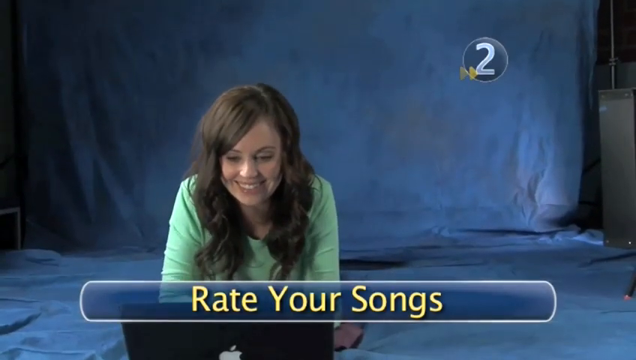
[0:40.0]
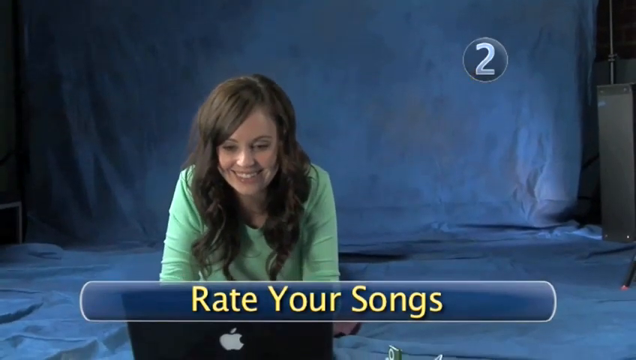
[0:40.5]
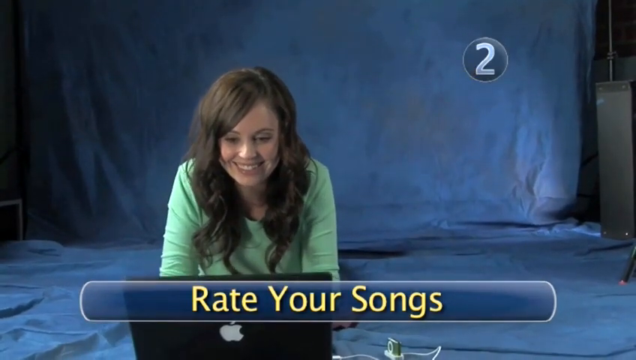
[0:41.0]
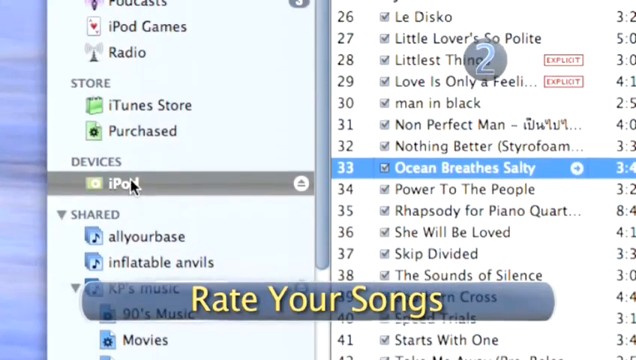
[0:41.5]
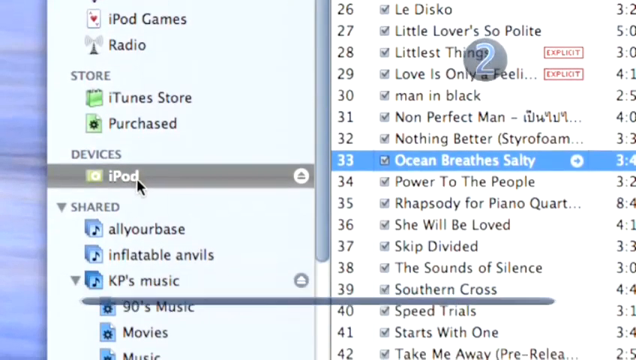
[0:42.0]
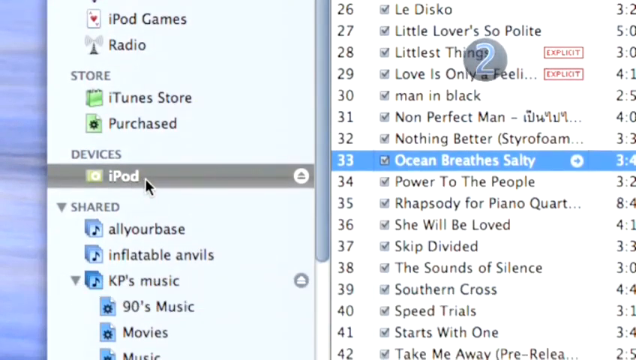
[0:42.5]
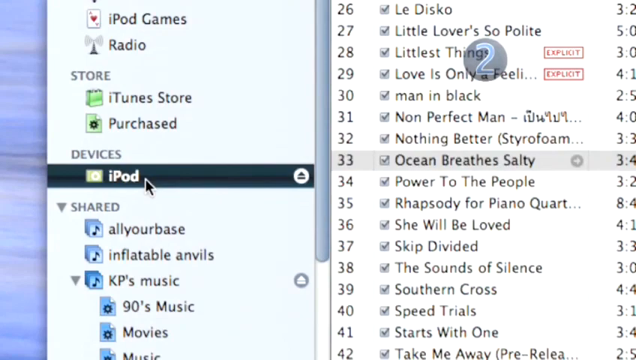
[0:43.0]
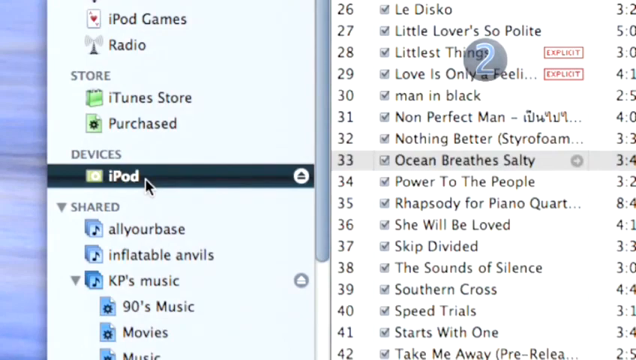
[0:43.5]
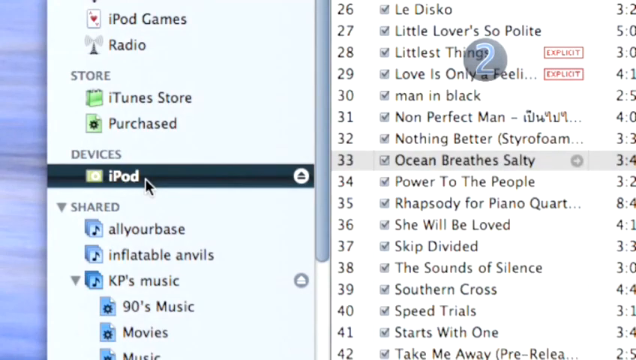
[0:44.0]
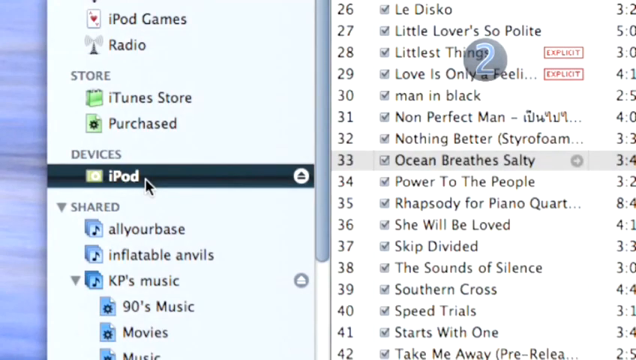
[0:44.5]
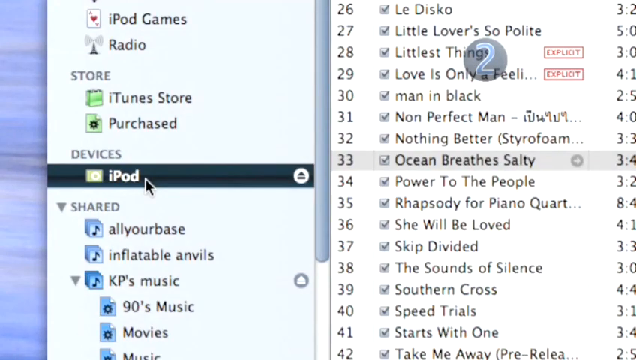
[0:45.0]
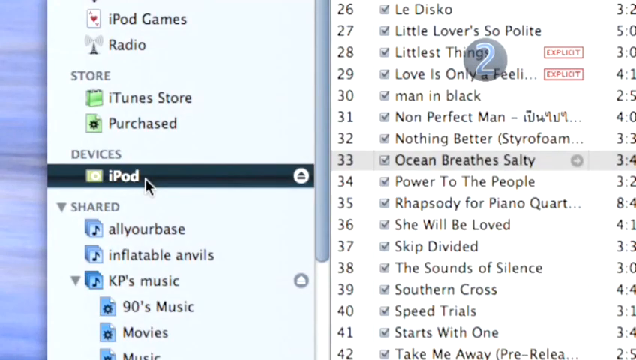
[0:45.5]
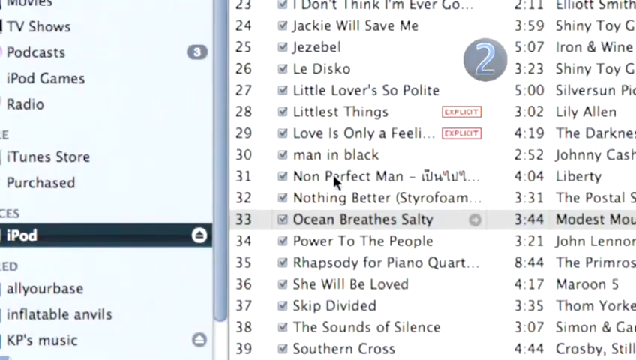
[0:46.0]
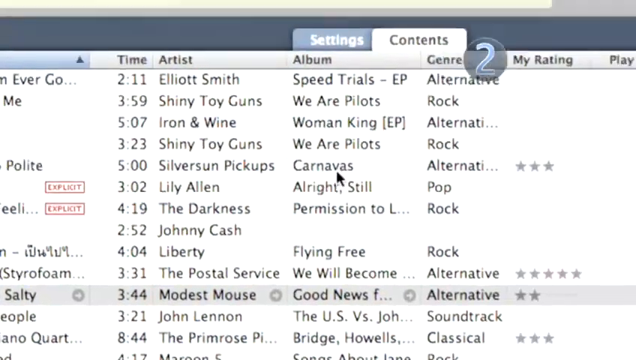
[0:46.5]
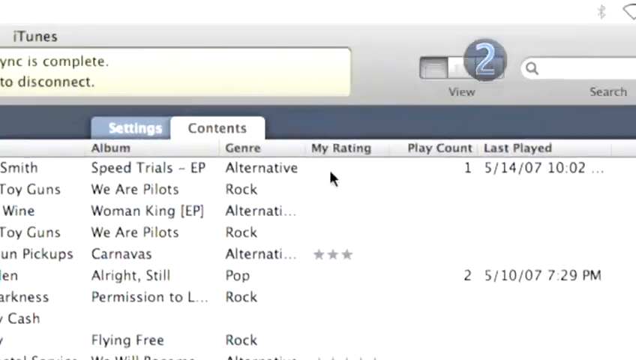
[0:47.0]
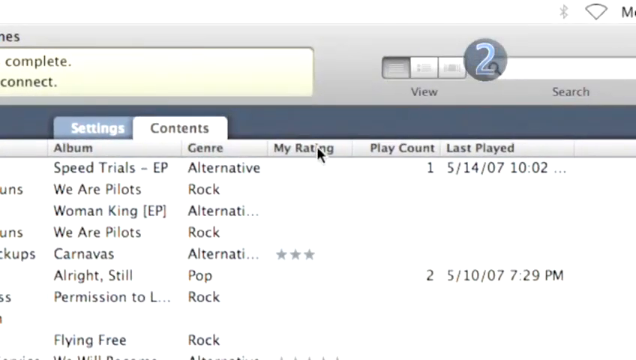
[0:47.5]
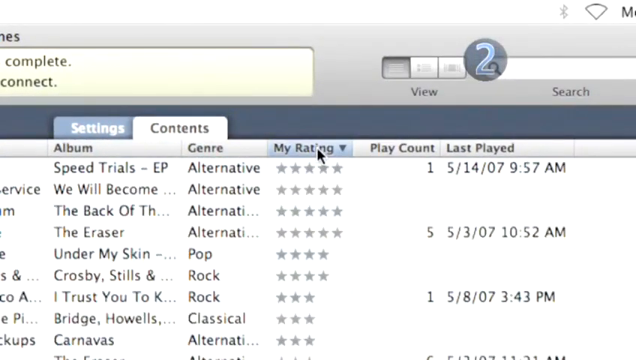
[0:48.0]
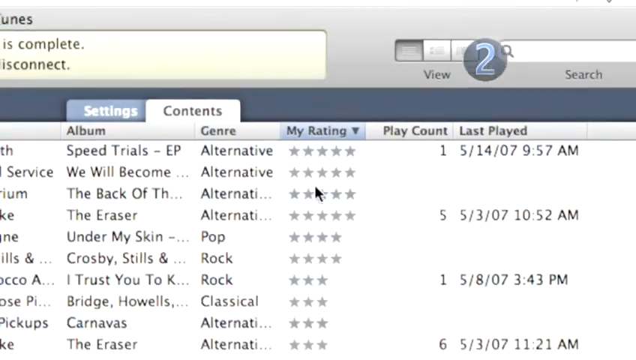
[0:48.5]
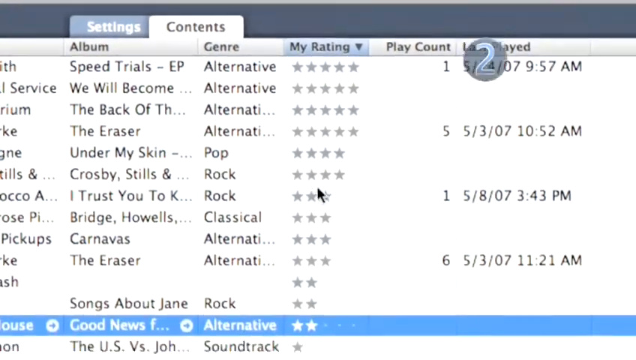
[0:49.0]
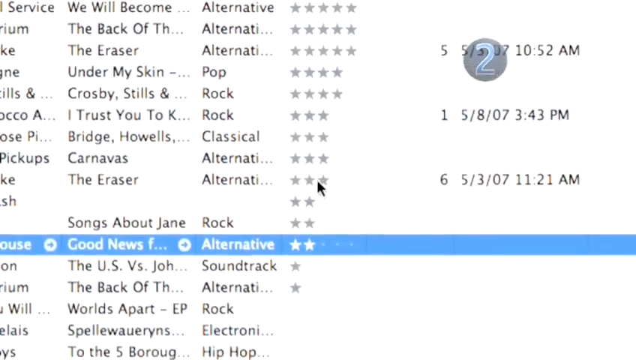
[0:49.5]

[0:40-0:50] The girl smiles at her laptop, with the text "Rate Your Songs" on the screen. The view switches to the laptop screen, where a program has iPods selected. The right side of the screen shows about 15 or 16 tracks on the iPod playlist. The view pans to the top, where it says "My Rating," and the songs are sorted from highest rating to lowest. Someone then goes down to a song with two stars on the playlist and highlights it, but nothing further is done.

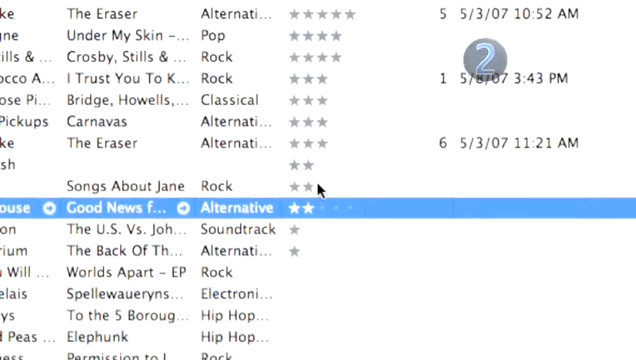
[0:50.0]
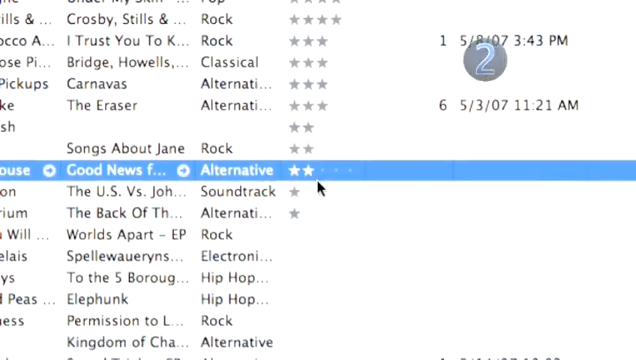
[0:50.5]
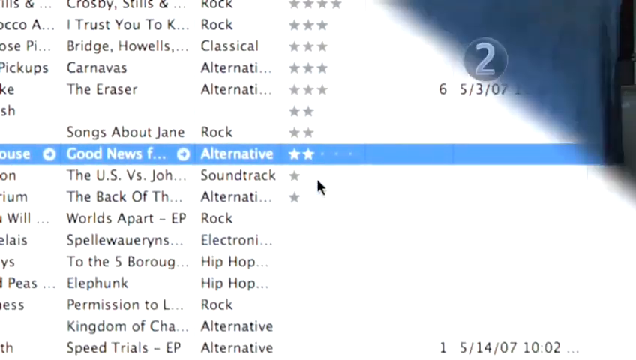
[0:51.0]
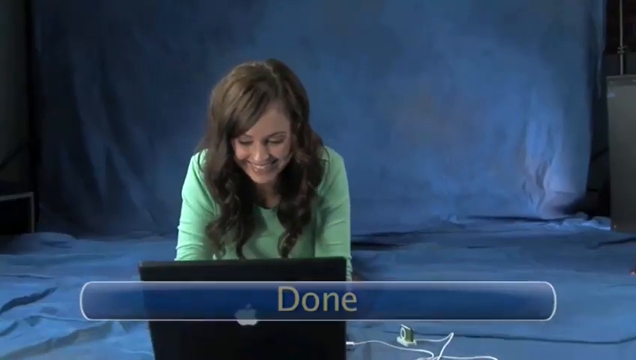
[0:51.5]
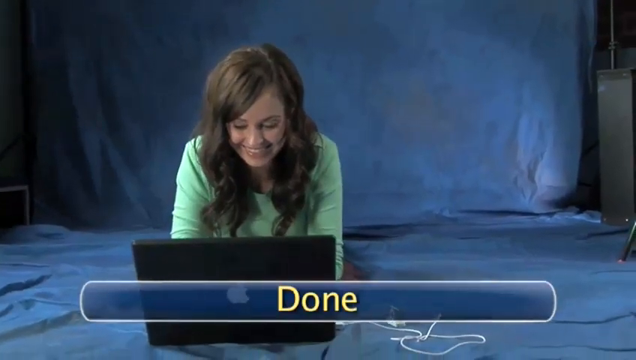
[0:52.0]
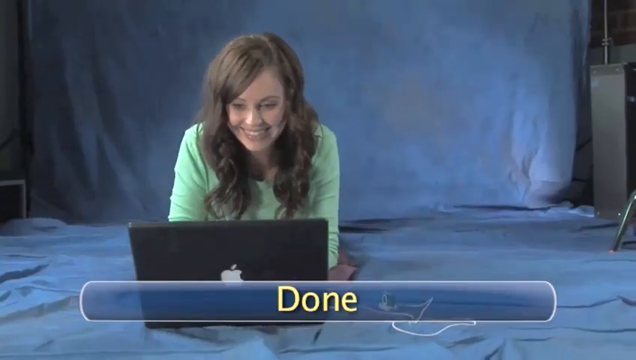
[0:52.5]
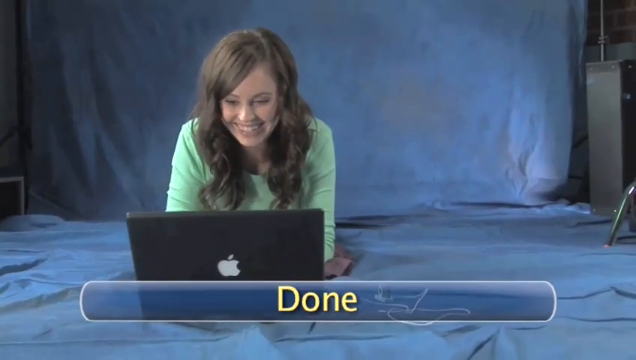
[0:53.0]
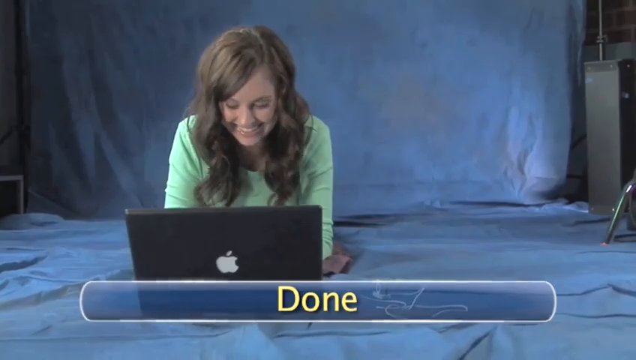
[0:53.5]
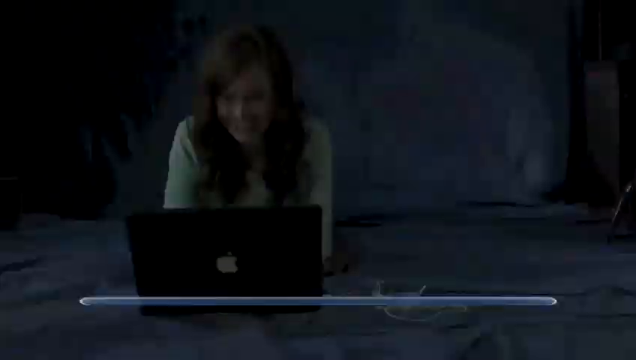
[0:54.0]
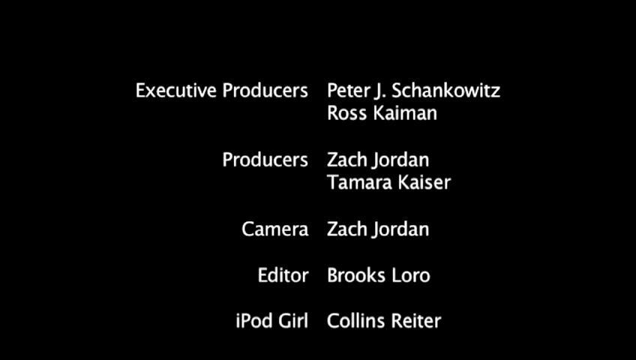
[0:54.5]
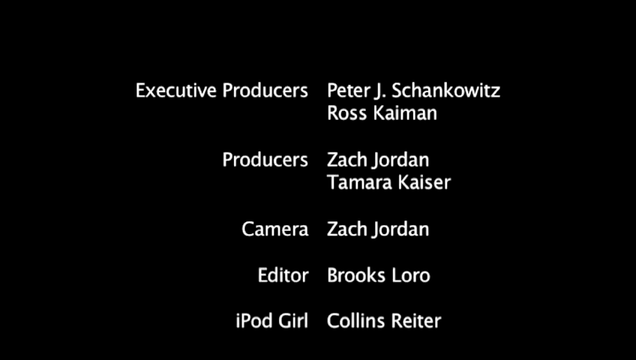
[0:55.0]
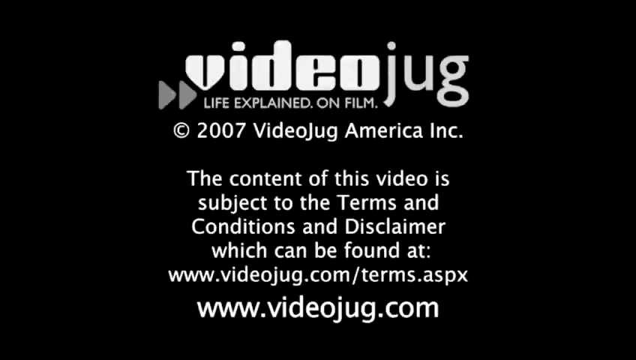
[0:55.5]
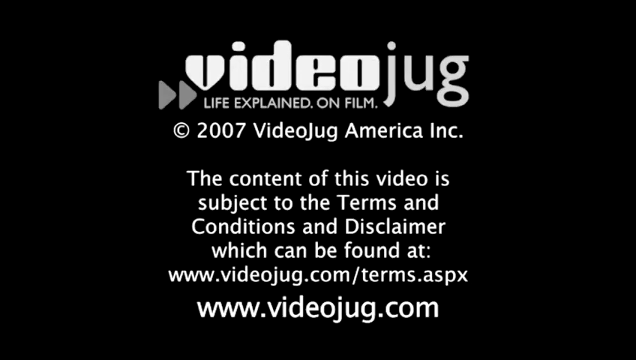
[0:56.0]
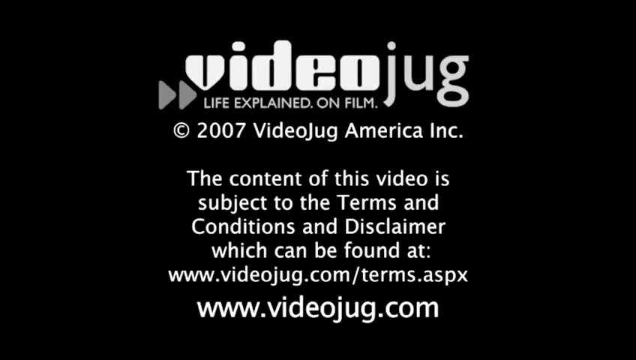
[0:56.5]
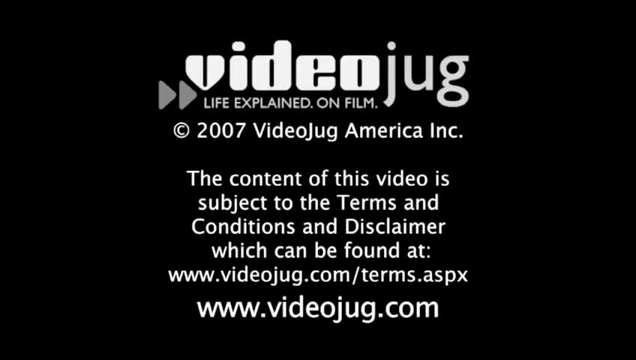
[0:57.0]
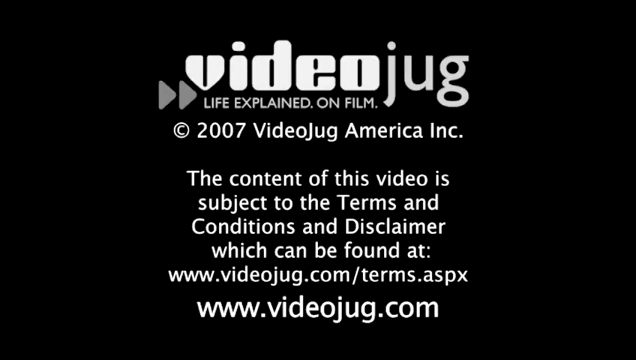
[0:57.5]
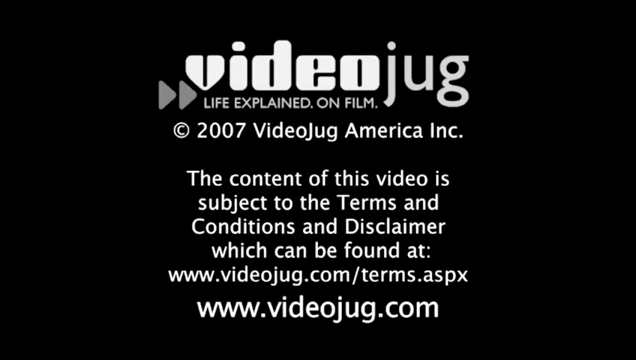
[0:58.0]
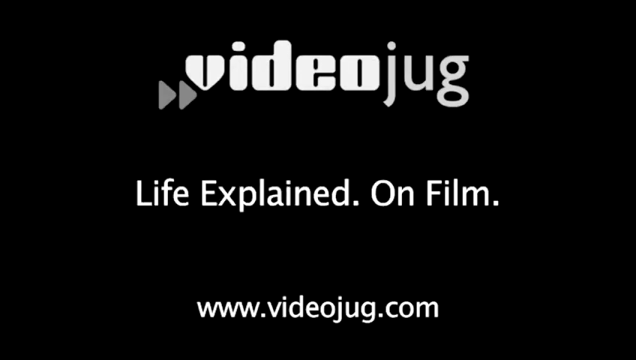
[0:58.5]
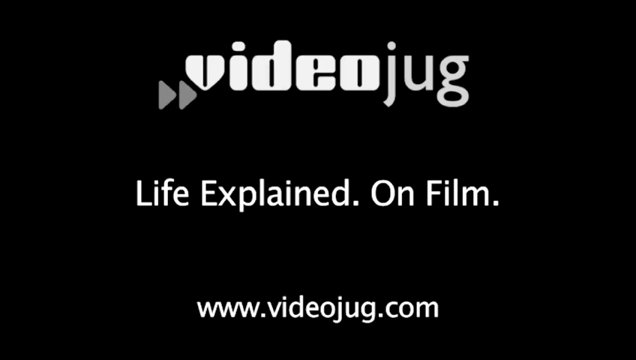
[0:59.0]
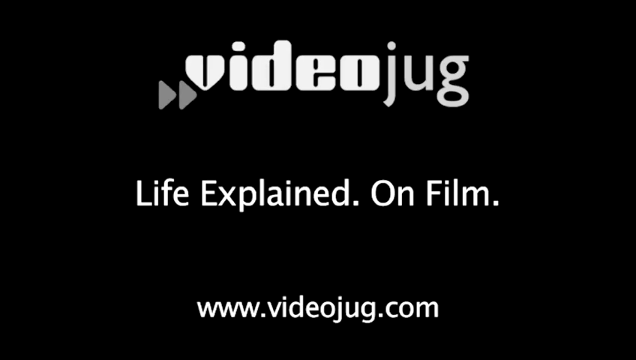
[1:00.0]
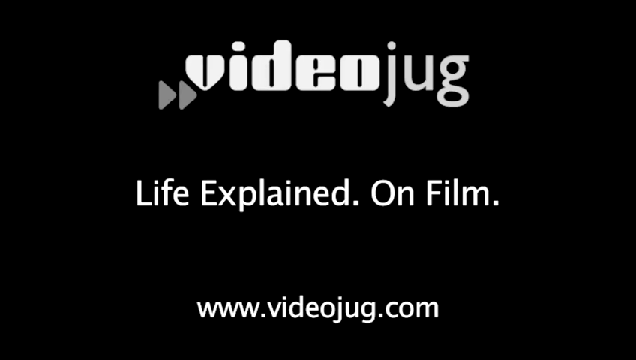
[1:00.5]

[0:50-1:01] The girl from the beginning of the video, with brown hair and a green top, lies on the set, which is covered with a blue sheet; what look to be sound bars or sound boxes are on the left and right. She is smiling and seems happy, and text on the video says "done." The video fades out to a black screen with credits listing the executive producers, producers and apparently anyone who worked on the video. It then pans to another black screen that says "Videojug Life Explained 2007 Videojug America. The content of this video is subject to the terms and conditions and disclaimer which can be found at www.videojug.com/terms.ASPX www.videojug.com." The final screen says "Videojug Life Explained on film www.videojug.com." This section seems to be the end credits of the tutorial and advertisement for Videojug.